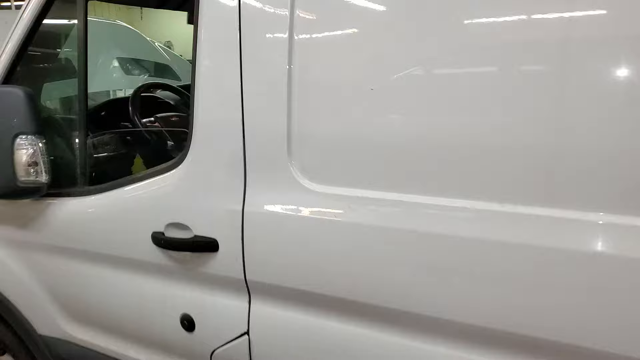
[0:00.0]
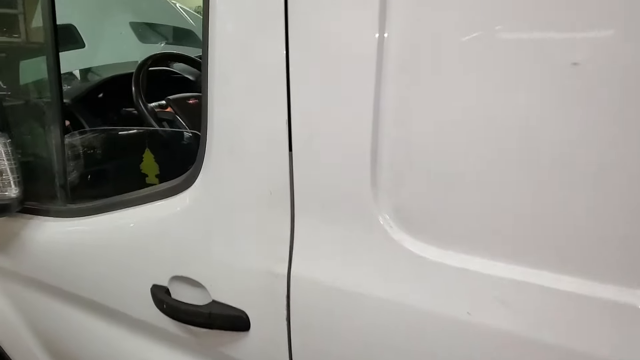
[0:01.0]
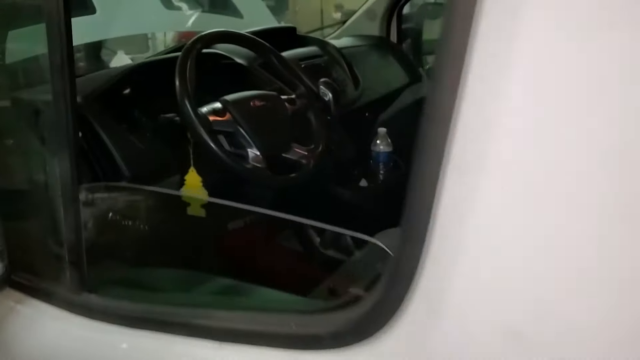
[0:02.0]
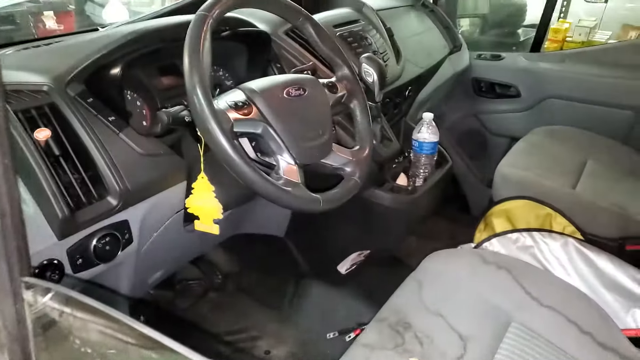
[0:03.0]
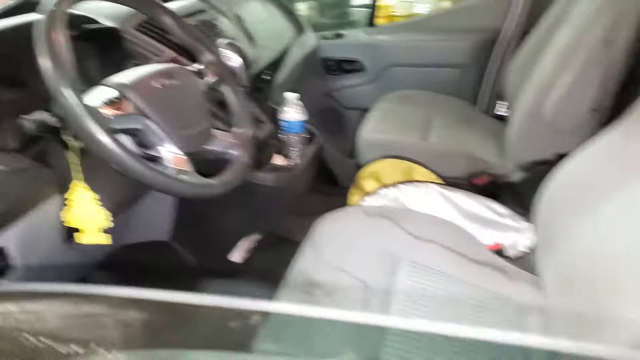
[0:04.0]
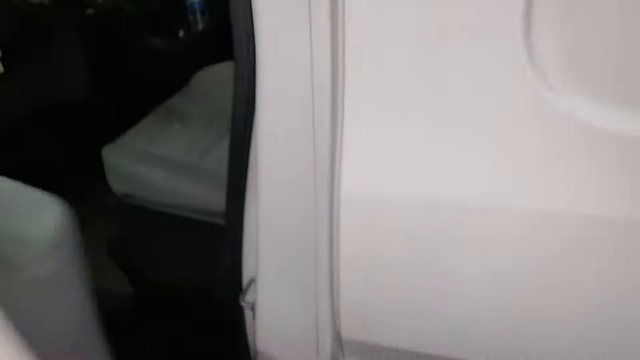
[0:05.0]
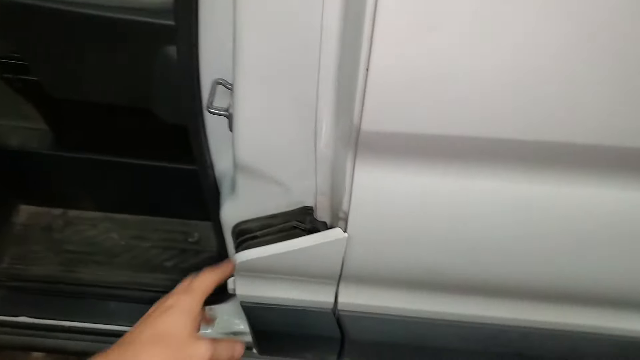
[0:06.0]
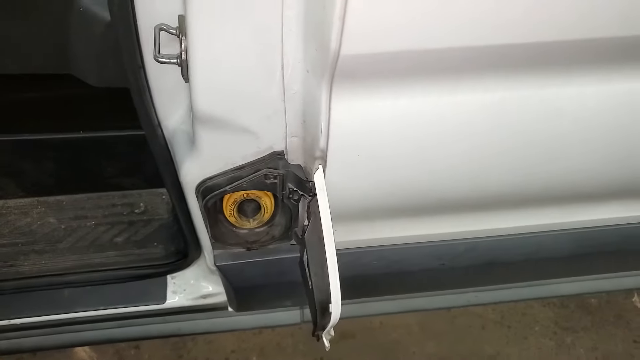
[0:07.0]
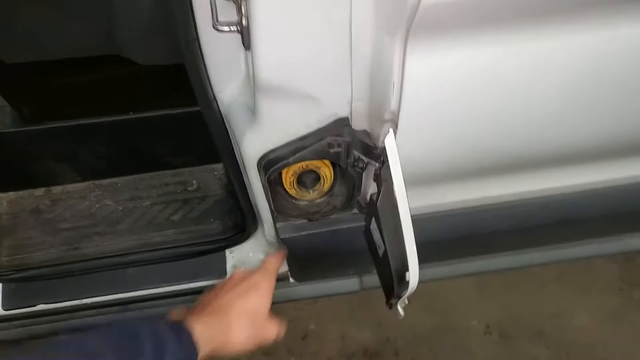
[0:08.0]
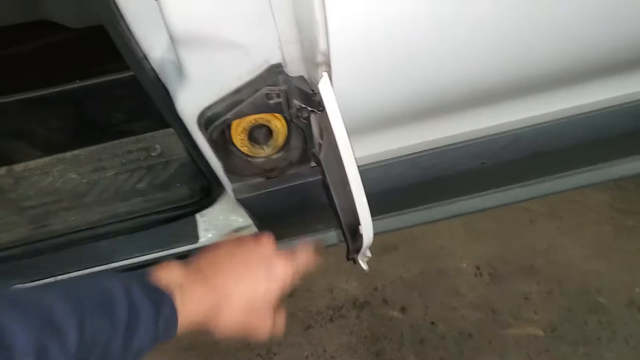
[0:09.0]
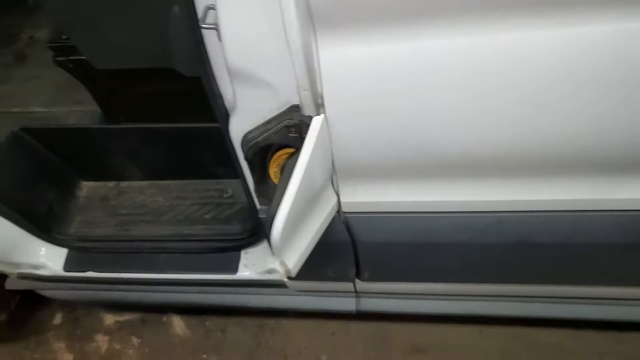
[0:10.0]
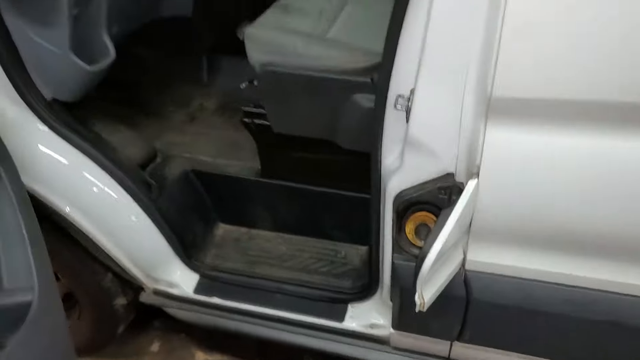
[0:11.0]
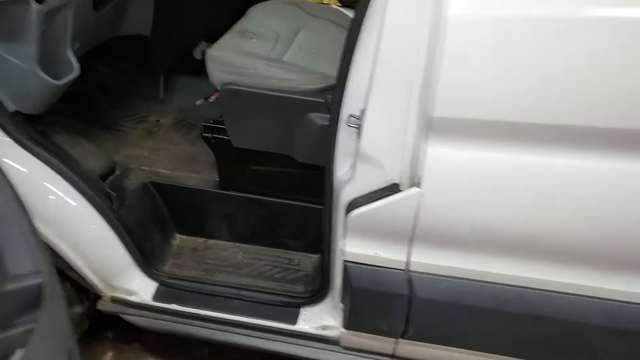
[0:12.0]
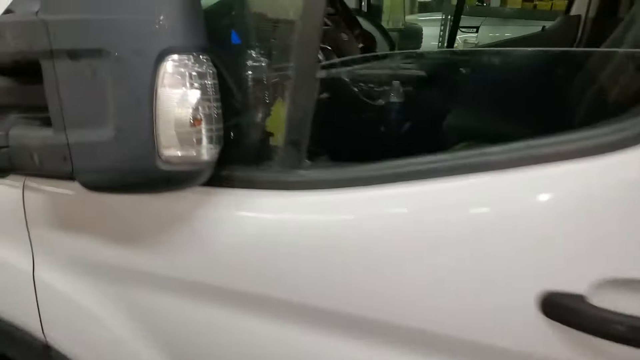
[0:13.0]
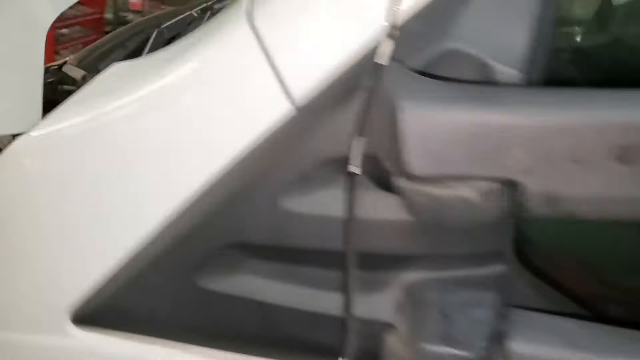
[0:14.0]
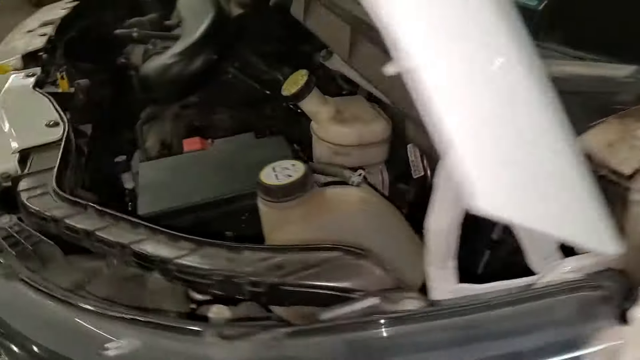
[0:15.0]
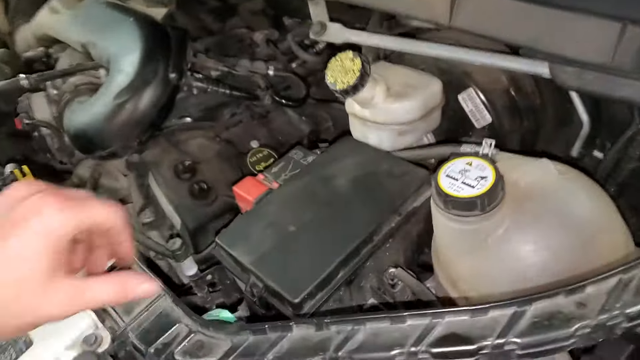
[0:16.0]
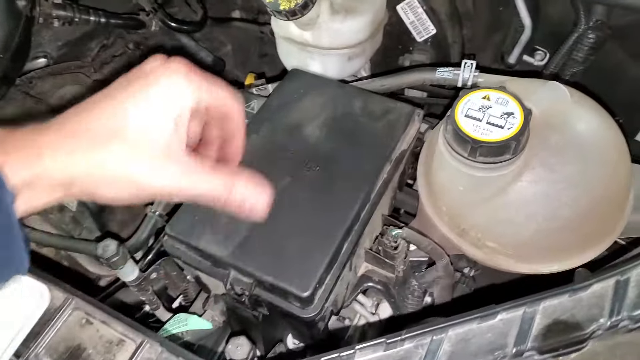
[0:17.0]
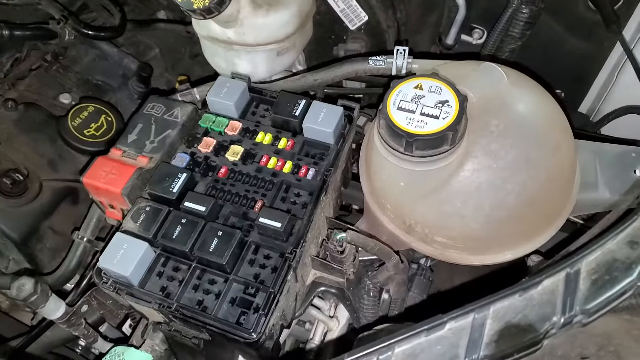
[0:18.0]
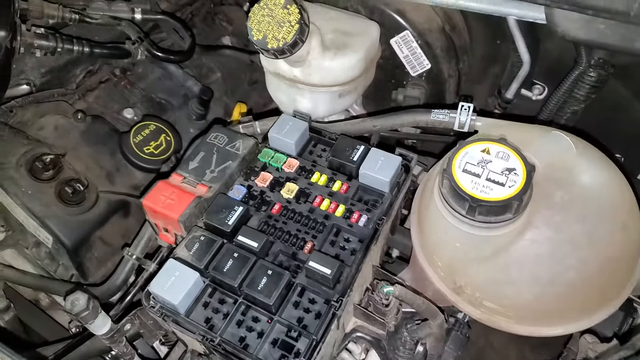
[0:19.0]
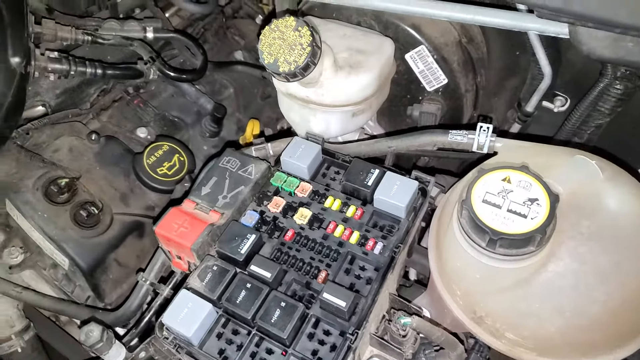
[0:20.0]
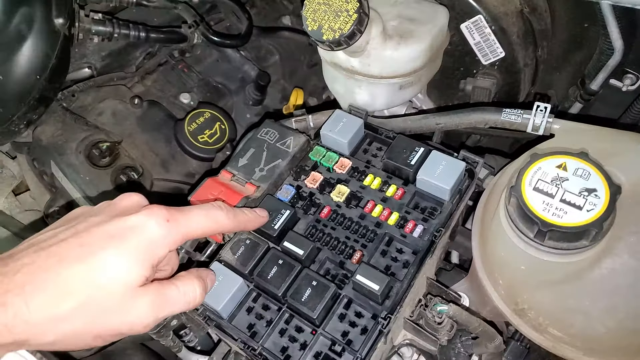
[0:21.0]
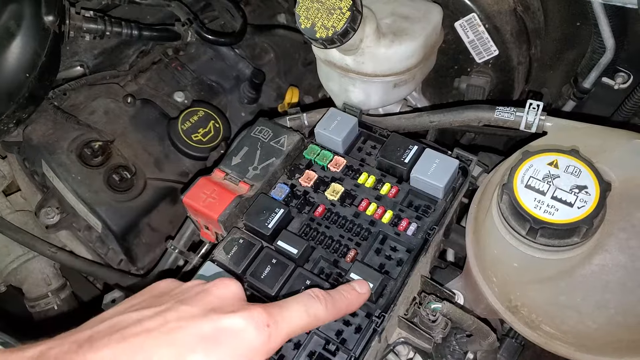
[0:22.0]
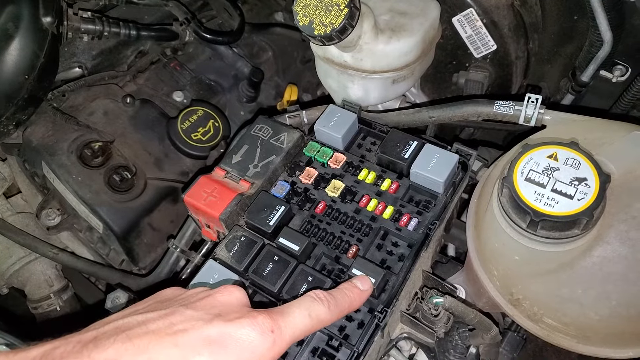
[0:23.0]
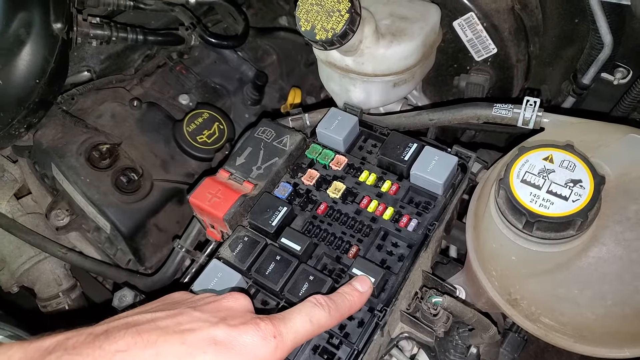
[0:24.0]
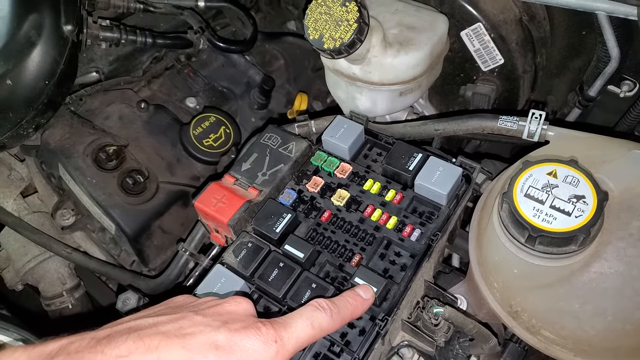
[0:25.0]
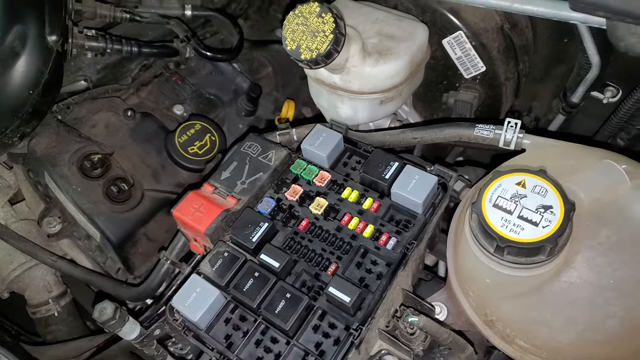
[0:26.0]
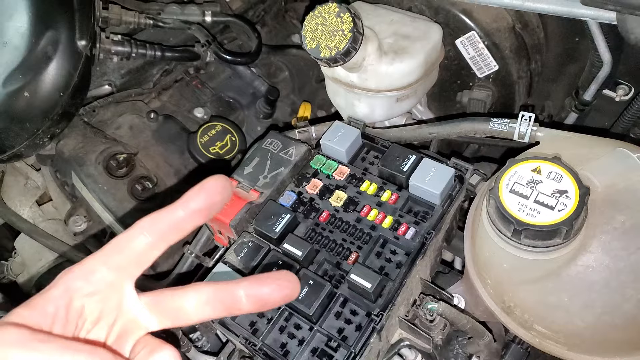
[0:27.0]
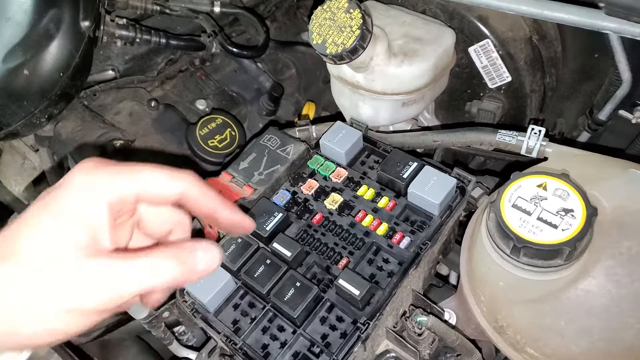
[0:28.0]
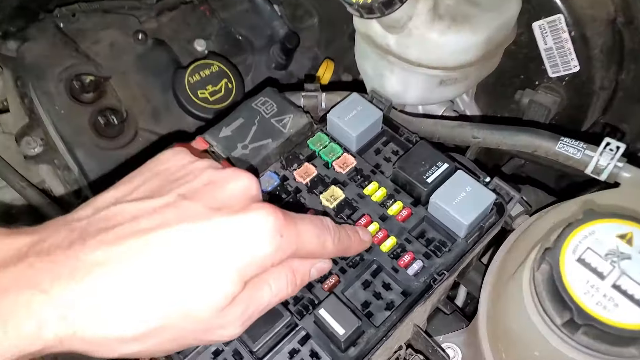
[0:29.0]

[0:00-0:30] The camera approaches a large white van from the driver's side. The driver's side window is mostly rolled down, and the view first looks into the interior of the van, showing the steering wheel, the dashboard, and other items inside, such as a water bottle and an air freshener hanging from one of the steering wheel levers. The person opens the driver's side door, looks down toward the bottom right side of the door, and finds a hatch there. Using their left hand, they open the hatch and press a button inside it with their left index finger. They close the hatch door with their left hand, attempting to slam it shut, but it does not close all the way, so they use their foot to close it completely. They then close the driver's side door and walk around to the front of the van to the hood area, where the hood is already open. With their left thumb they flip open a black rectangular lid covering one of the interior engine parts of the vehicle, and remove it with their left hand. Using their left index finger, they press one of the buttons inside on the left side, then a button on the right side. They give a peace sign with their left hand, index and middle fingers extended, and then press a yellow button on the same compartment with their left index finger.